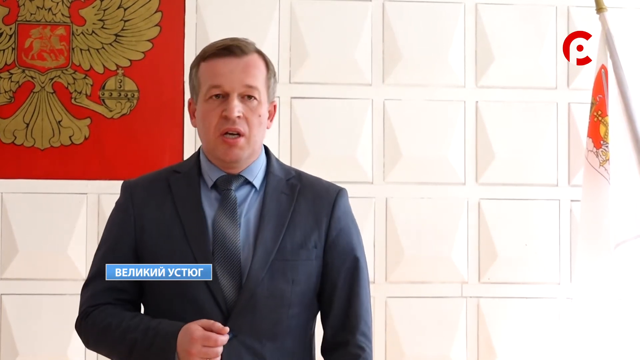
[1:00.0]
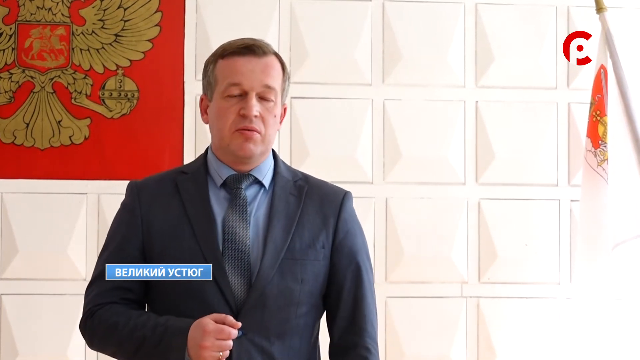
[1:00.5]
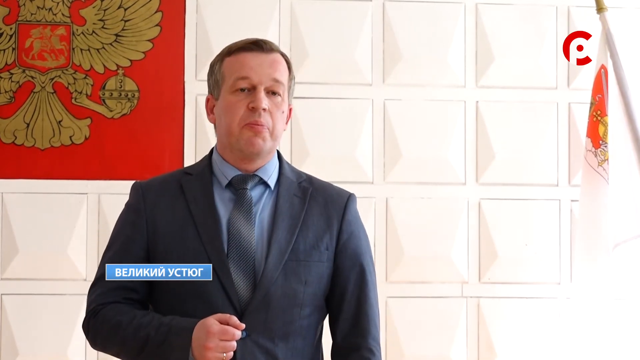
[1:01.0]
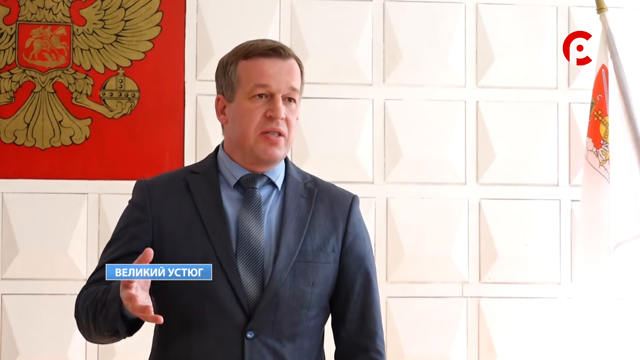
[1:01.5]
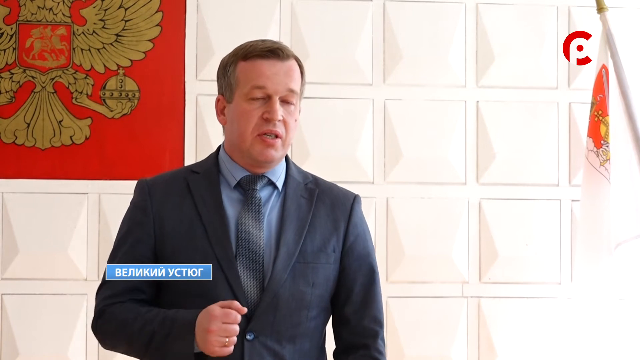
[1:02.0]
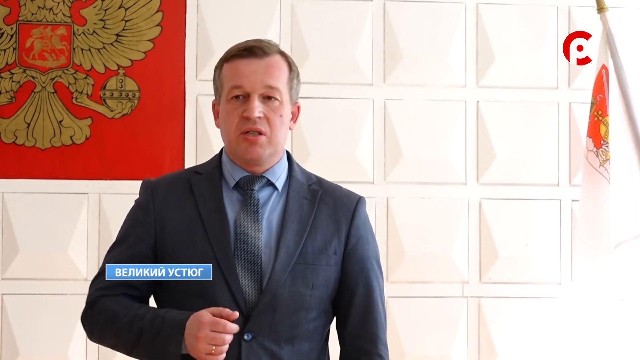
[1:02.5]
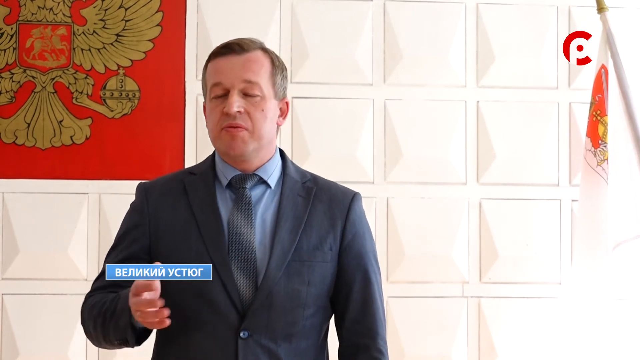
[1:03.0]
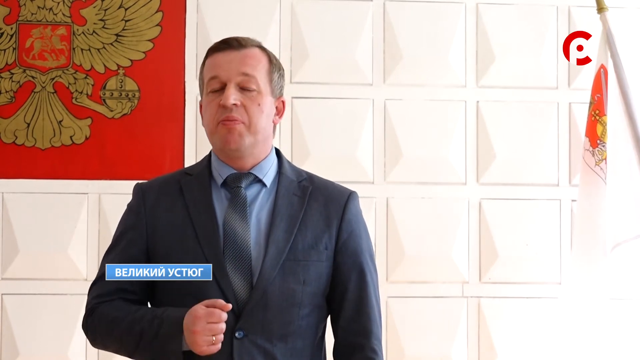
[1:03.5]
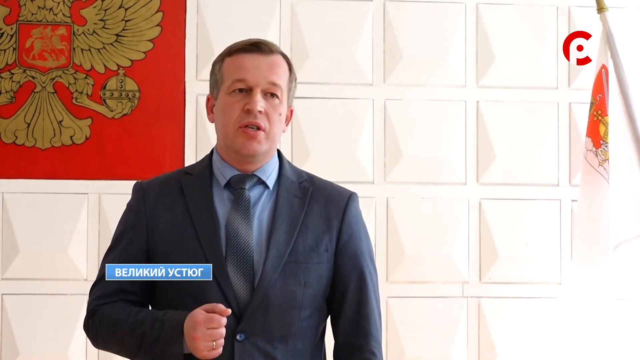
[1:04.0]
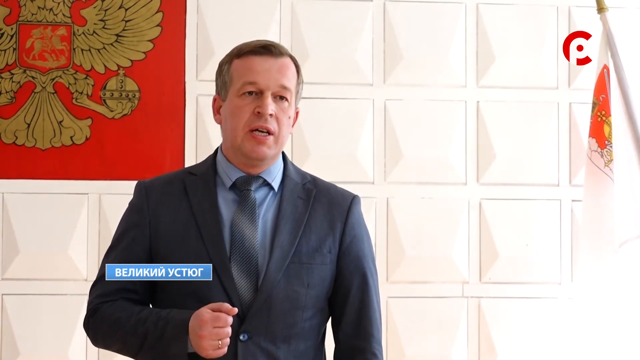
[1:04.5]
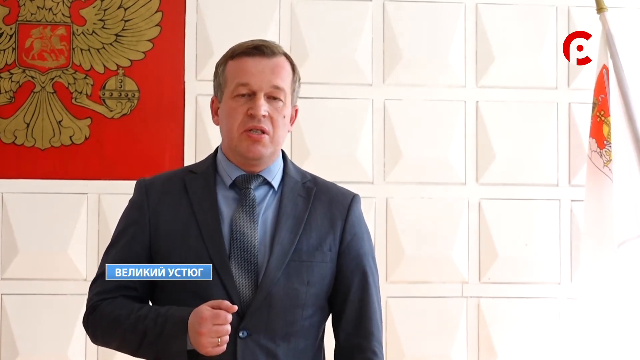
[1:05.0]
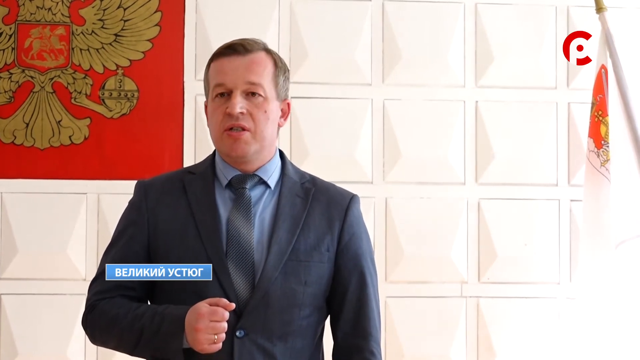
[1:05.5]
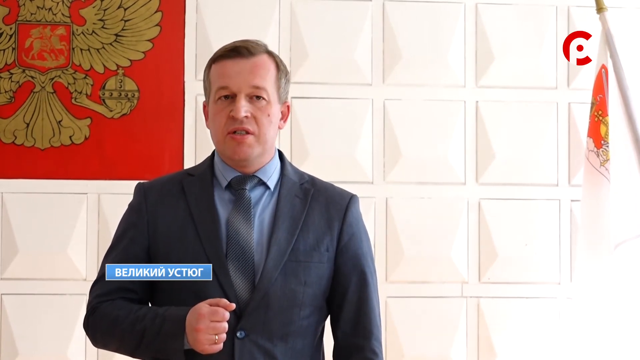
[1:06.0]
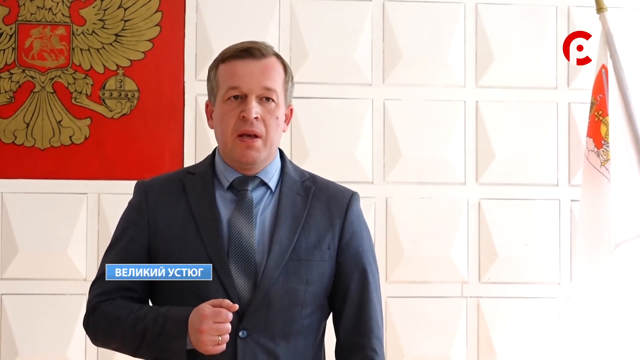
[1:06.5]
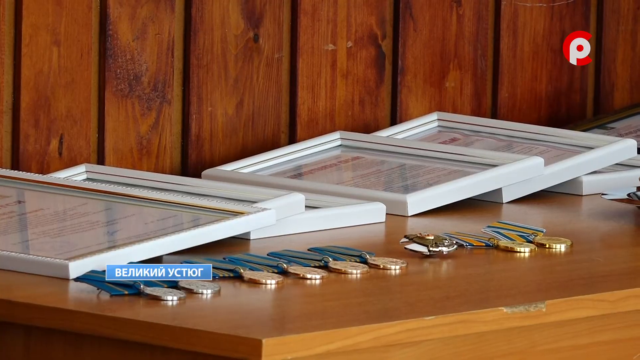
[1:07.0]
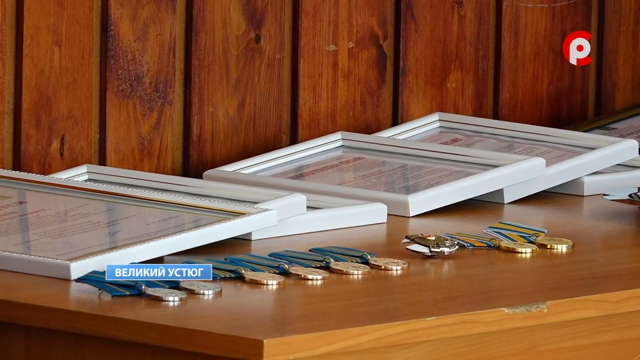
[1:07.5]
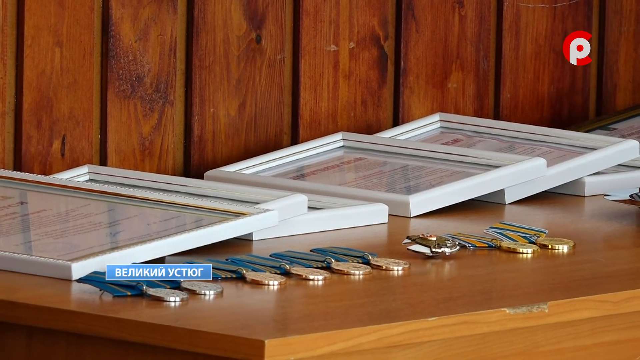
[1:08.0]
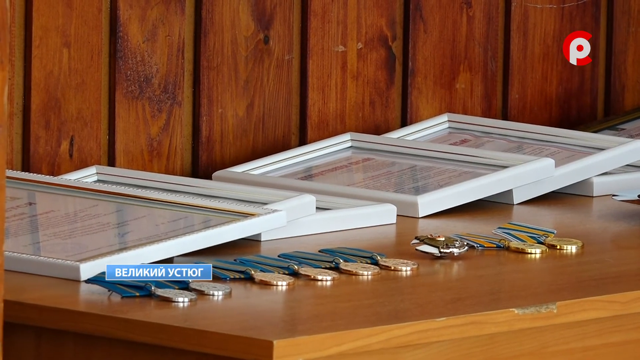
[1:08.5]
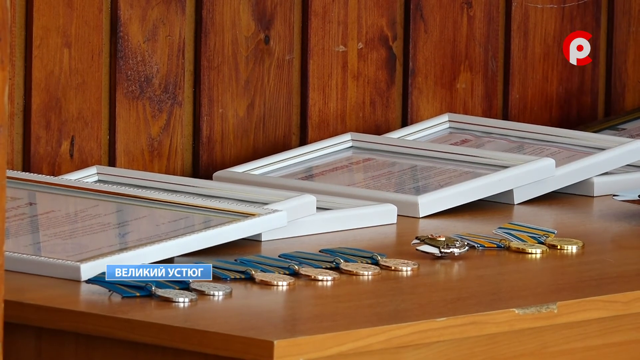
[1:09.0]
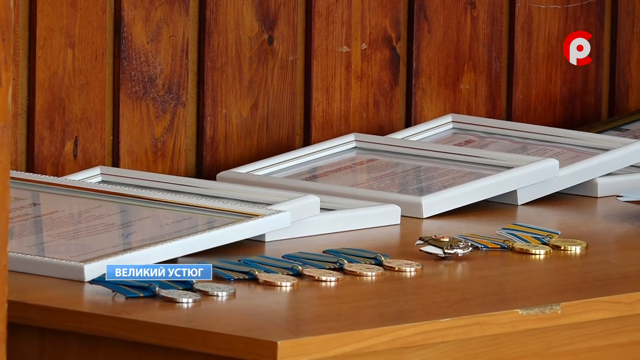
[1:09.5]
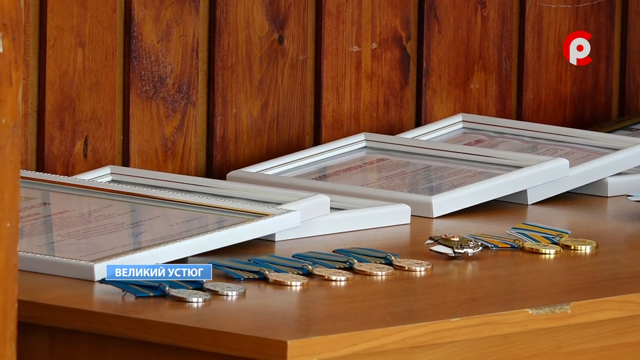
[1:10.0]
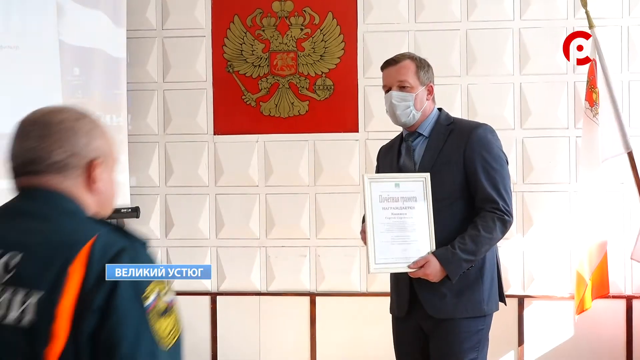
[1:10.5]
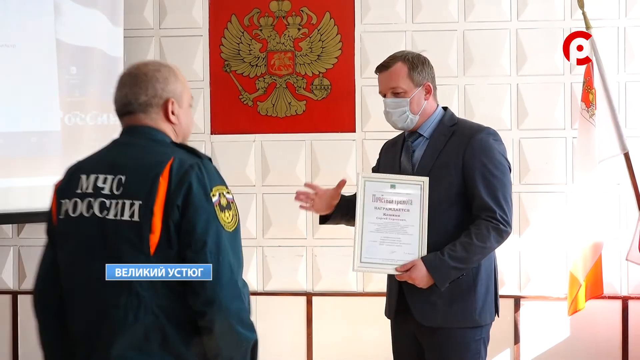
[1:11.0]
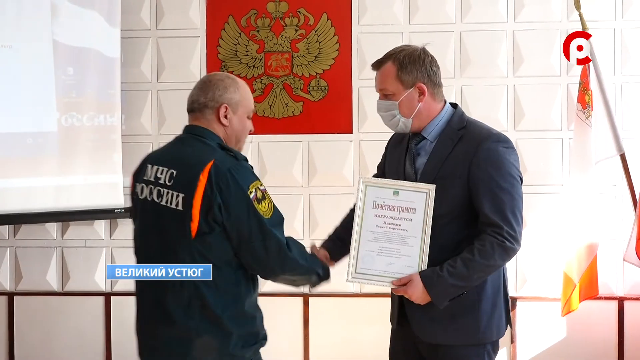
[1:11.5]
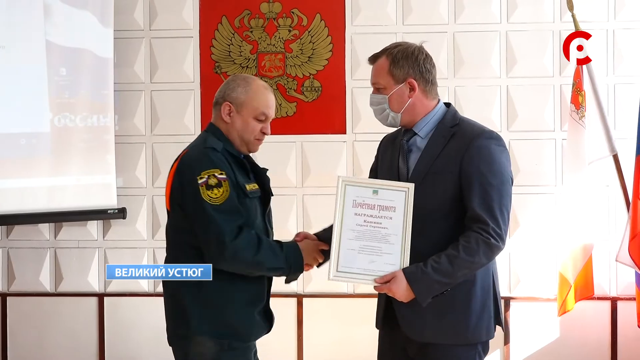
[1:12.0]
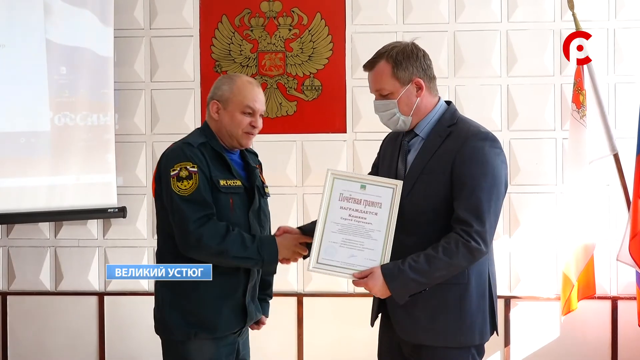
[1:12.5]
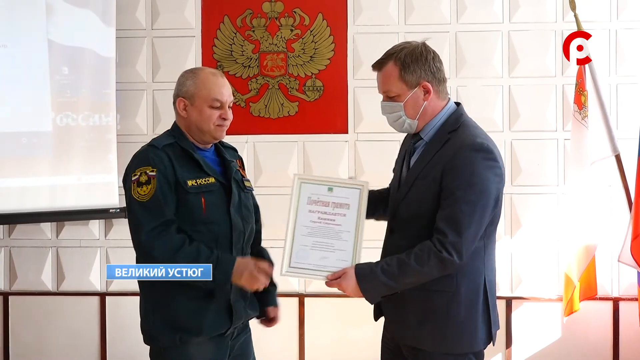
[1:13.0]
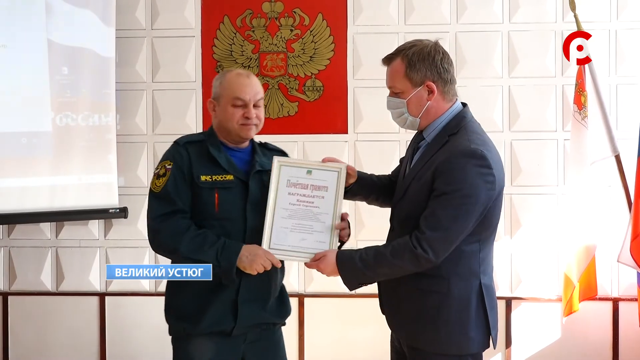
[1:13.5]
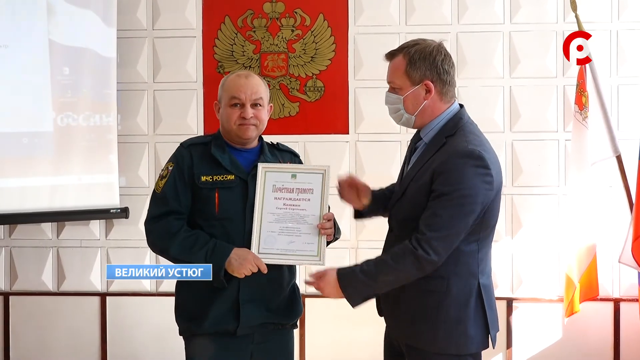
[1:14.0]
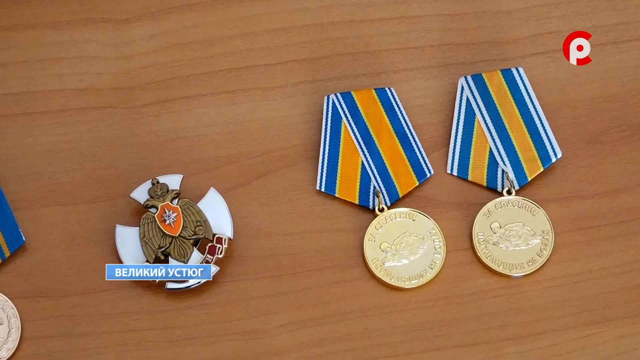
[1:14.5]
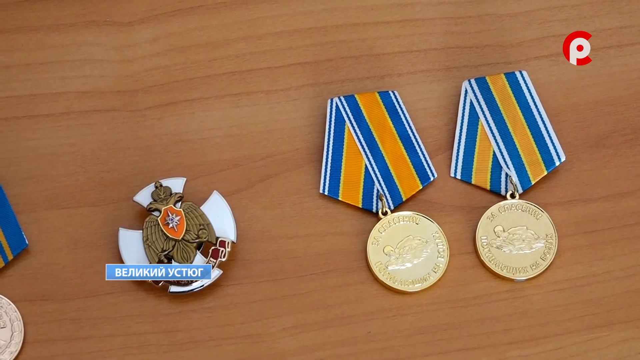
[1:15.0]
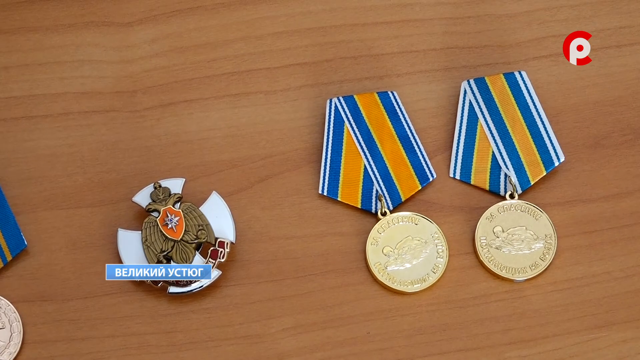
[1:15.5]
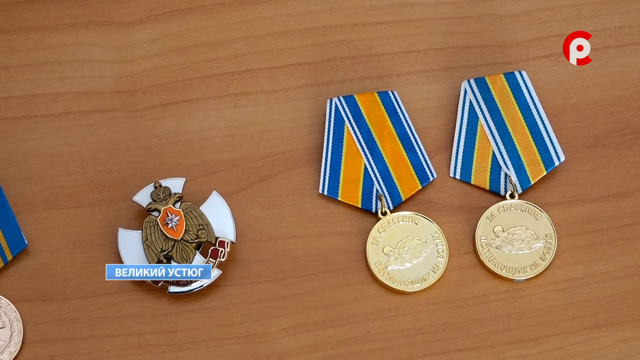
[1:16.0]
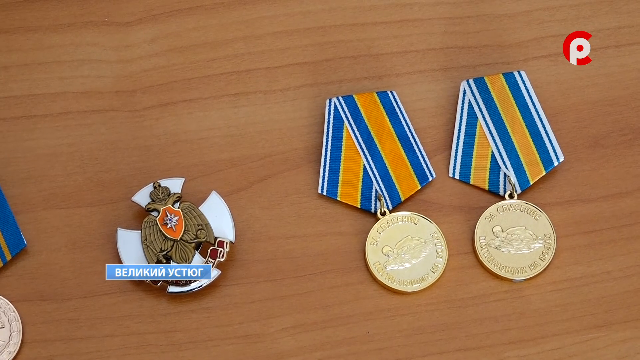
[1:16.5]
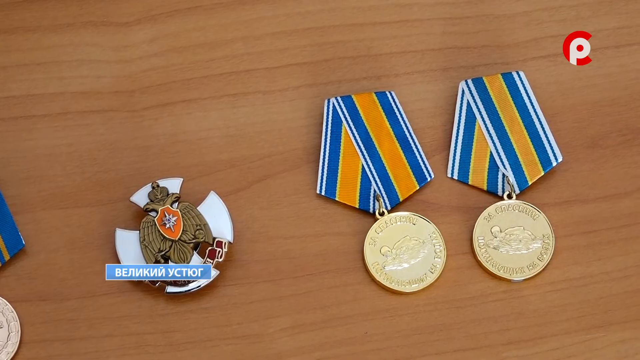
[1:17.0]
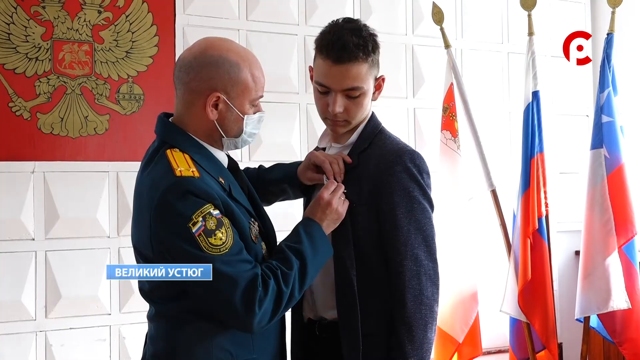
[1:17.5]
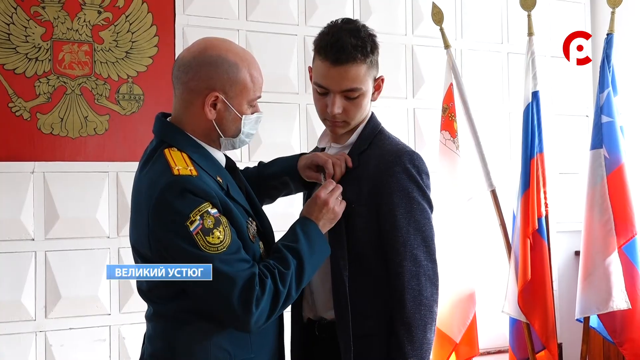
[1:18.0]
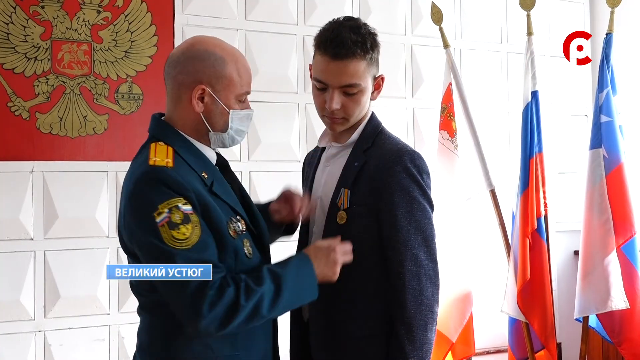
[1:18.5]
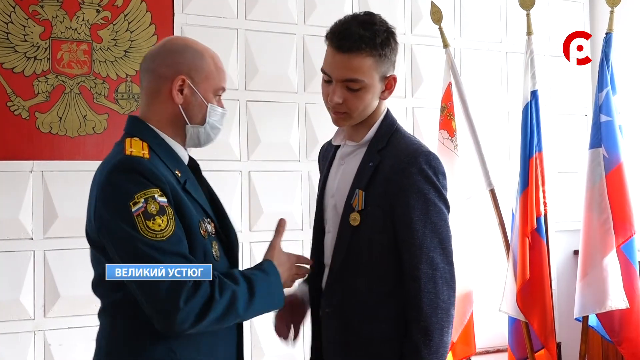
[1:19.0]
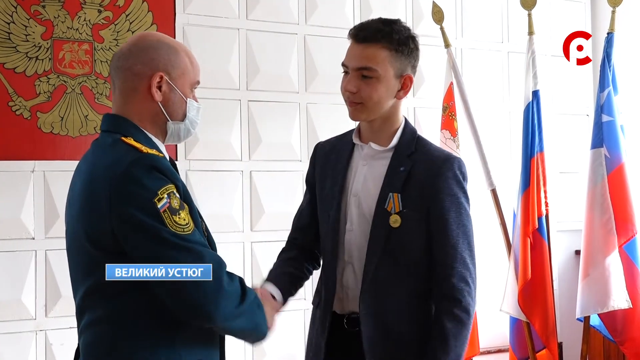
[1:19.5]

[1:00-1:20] The man in the suit is speaking while being filmed in the separate room. The camera pans over to a table covered with numerous medals and plaques with writing on them, then returns to the man in the suit, who is apparently speaking about what the medals are for or who they are for. Wearing a mask, he presents certificates to one man. The video cuts to the medals again, and then the military man in the blue suit pins a medal to the coat of a young teenager, then pins another medal on a second young teen. The people present are a mix of military personnel and civilians, distinguishable by their different outfits.